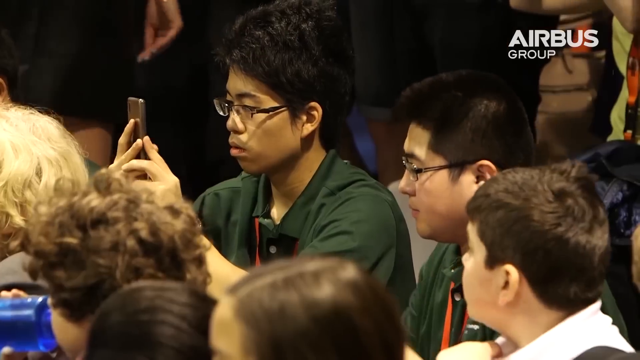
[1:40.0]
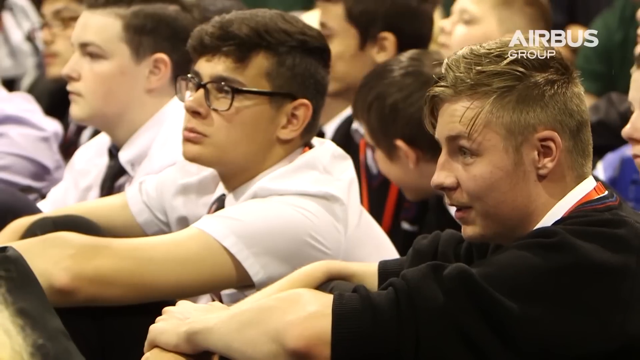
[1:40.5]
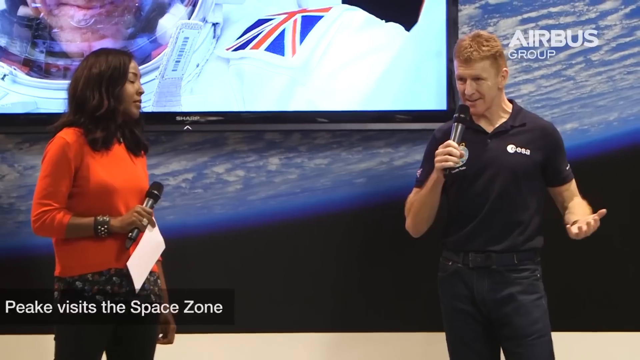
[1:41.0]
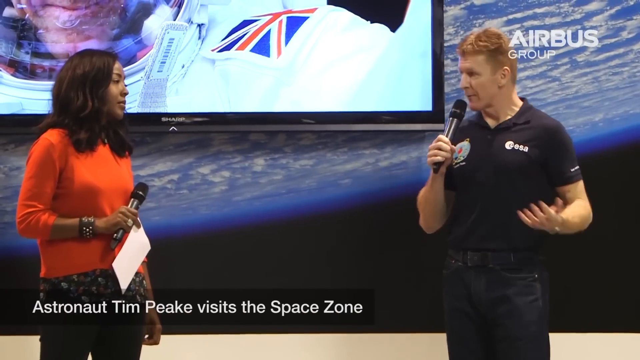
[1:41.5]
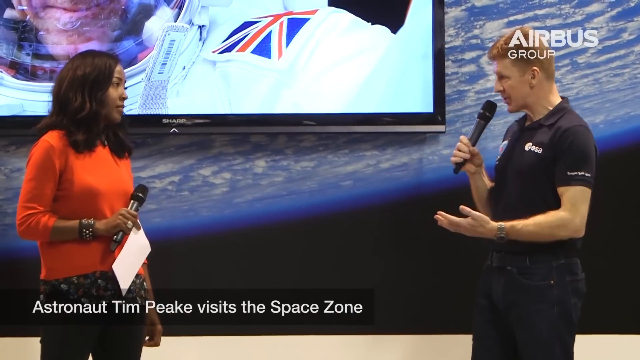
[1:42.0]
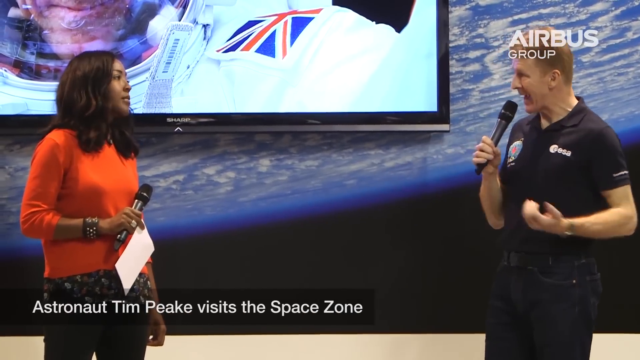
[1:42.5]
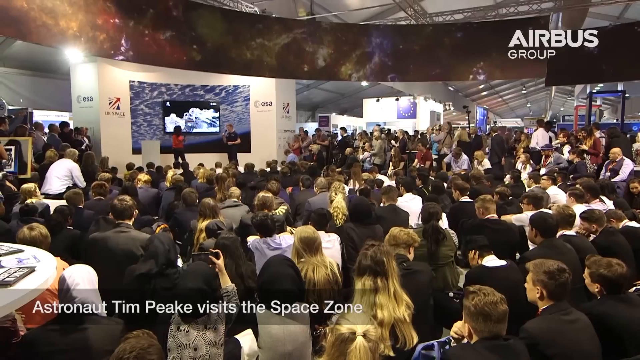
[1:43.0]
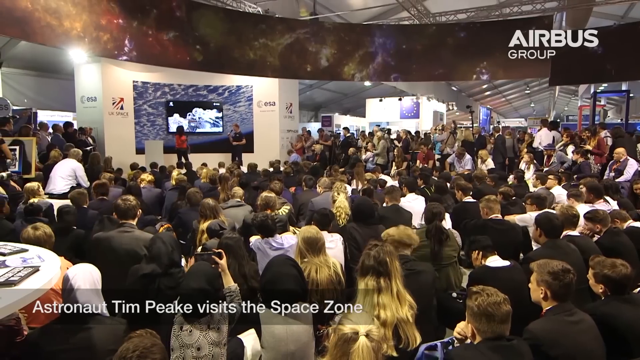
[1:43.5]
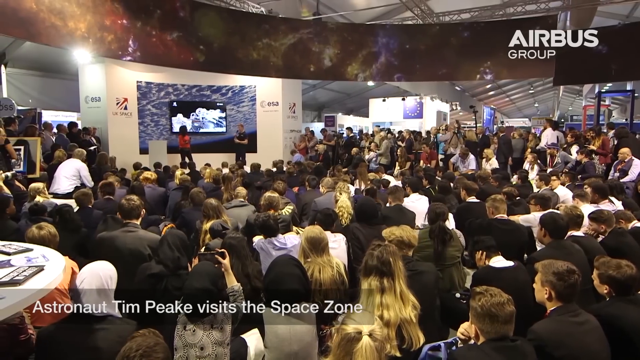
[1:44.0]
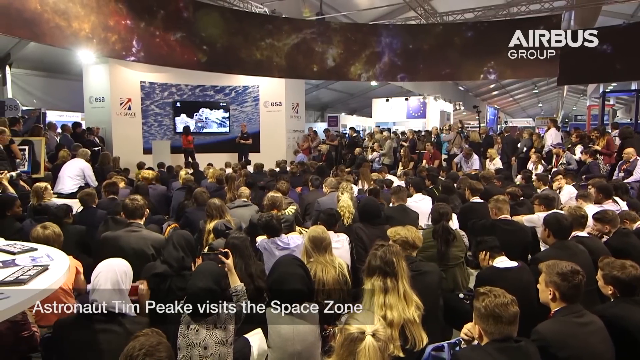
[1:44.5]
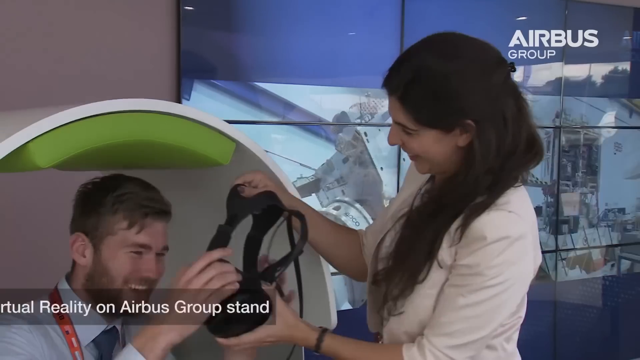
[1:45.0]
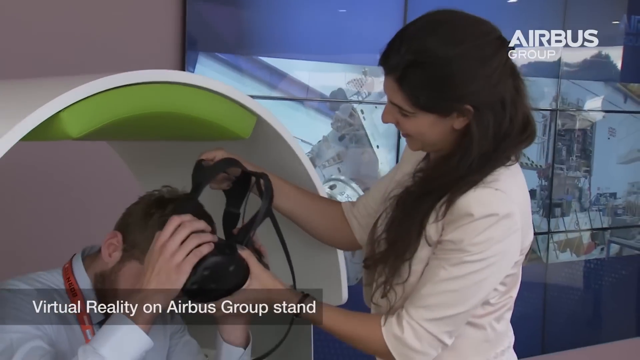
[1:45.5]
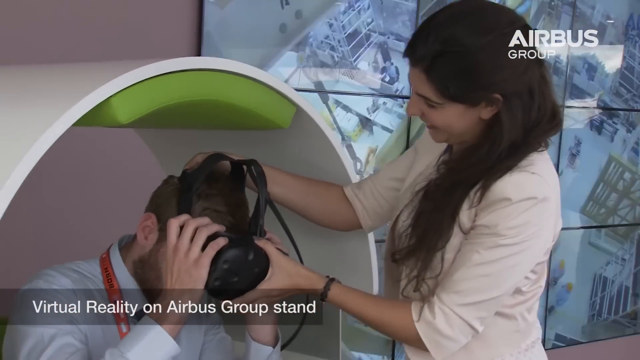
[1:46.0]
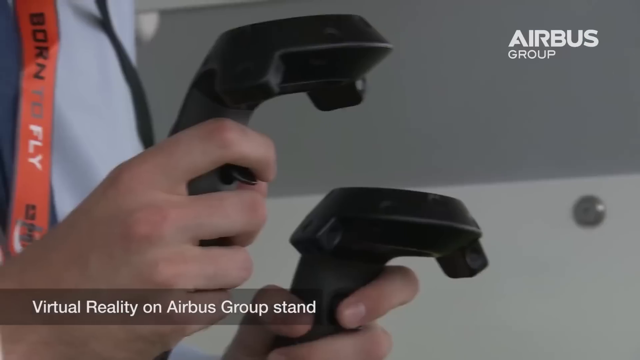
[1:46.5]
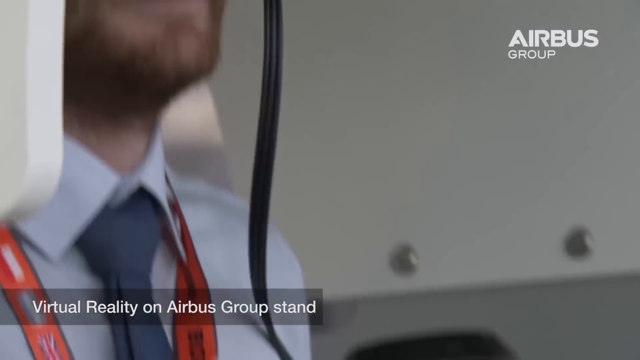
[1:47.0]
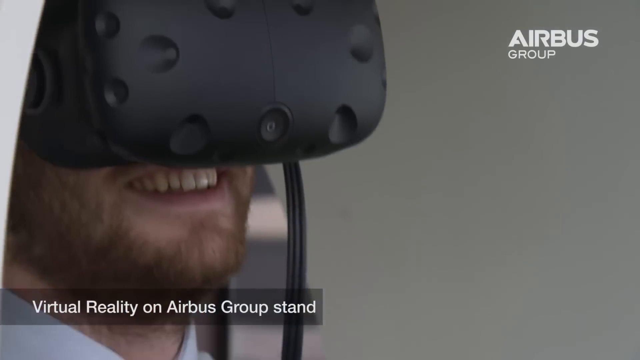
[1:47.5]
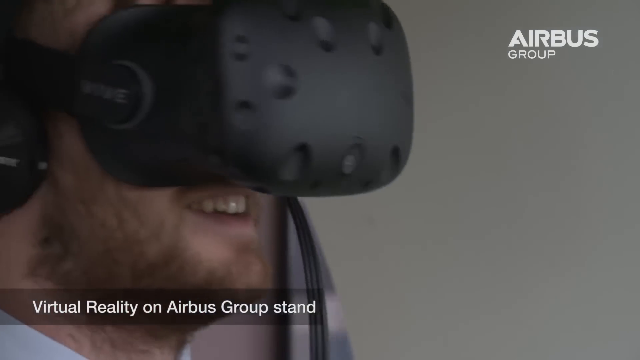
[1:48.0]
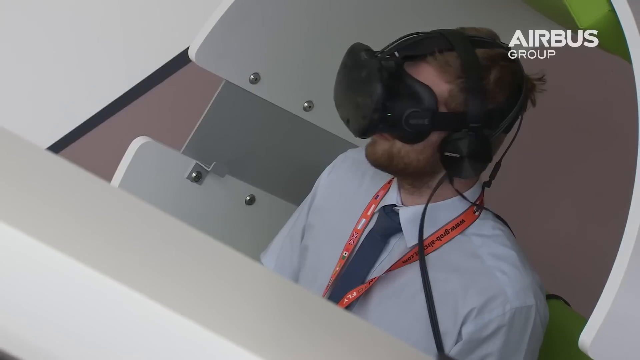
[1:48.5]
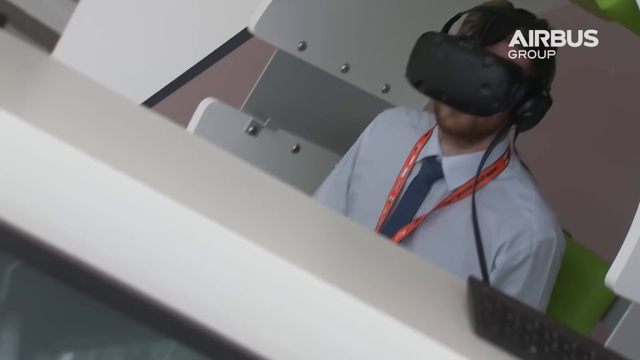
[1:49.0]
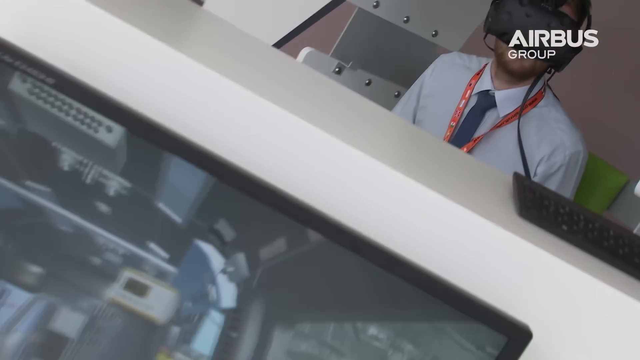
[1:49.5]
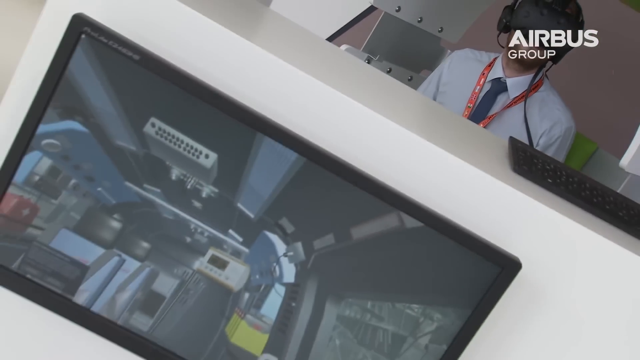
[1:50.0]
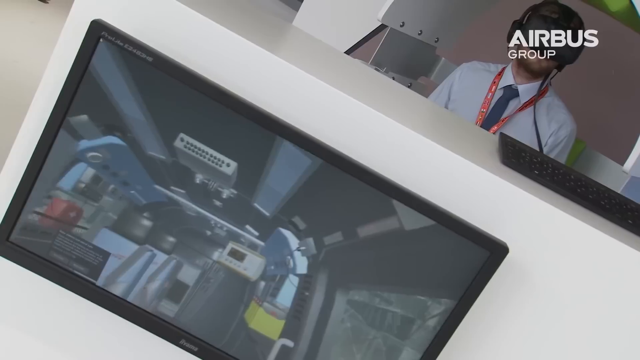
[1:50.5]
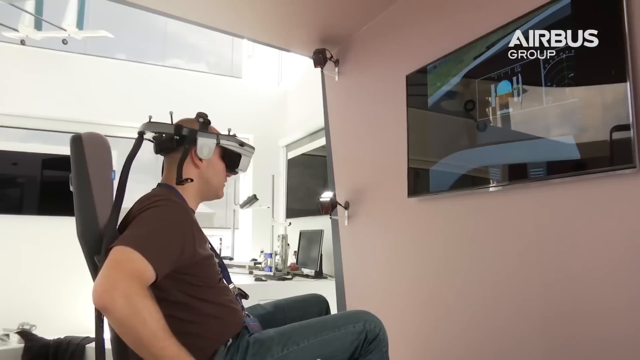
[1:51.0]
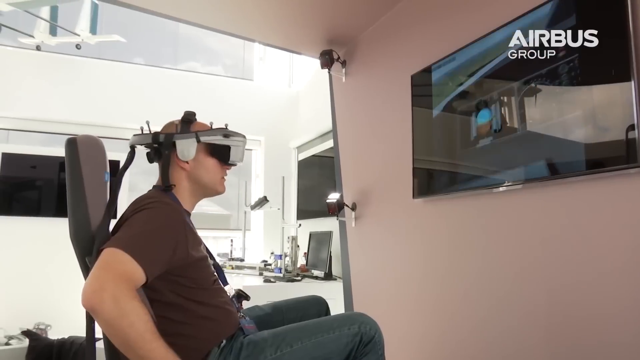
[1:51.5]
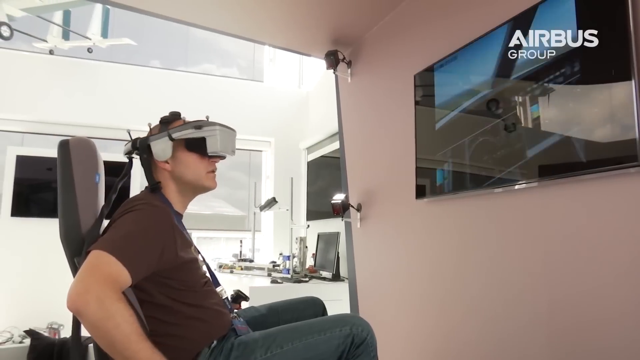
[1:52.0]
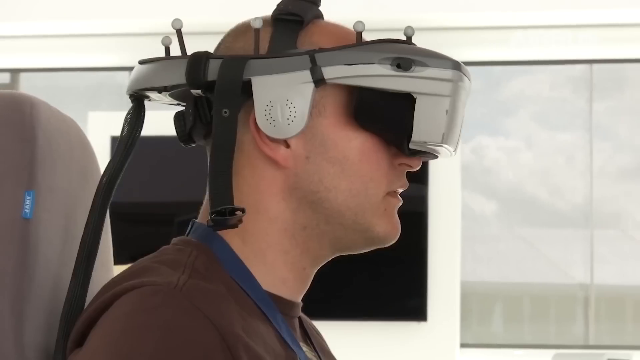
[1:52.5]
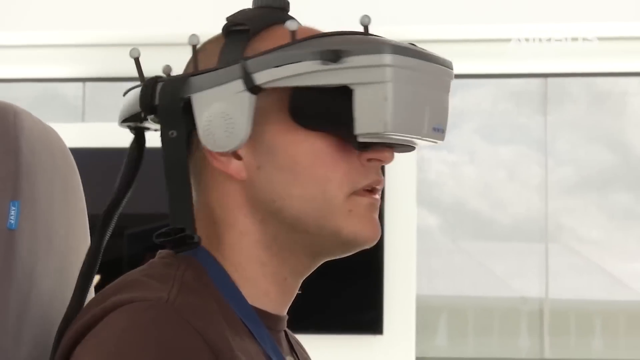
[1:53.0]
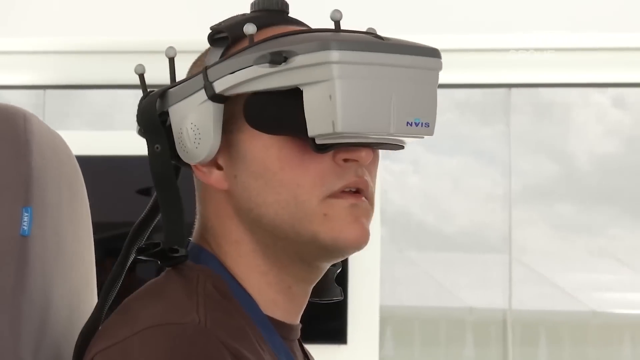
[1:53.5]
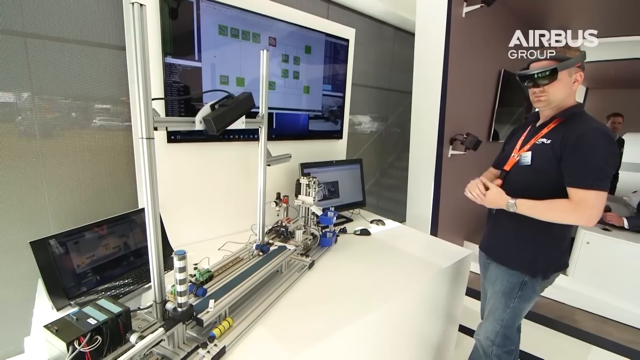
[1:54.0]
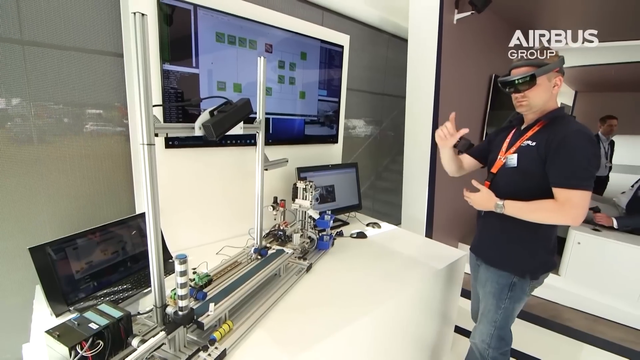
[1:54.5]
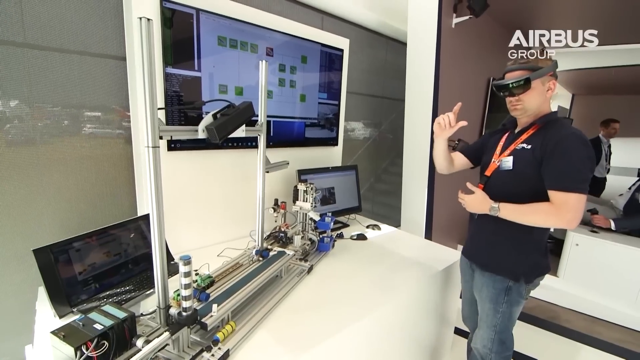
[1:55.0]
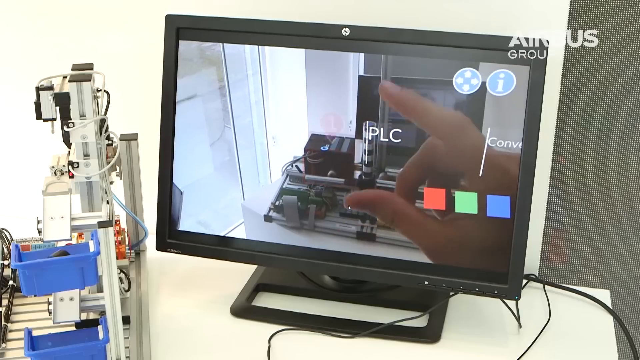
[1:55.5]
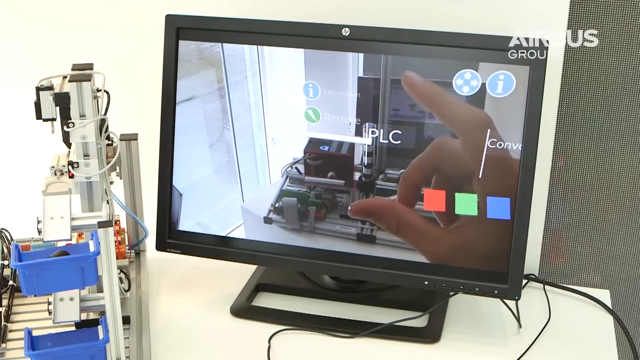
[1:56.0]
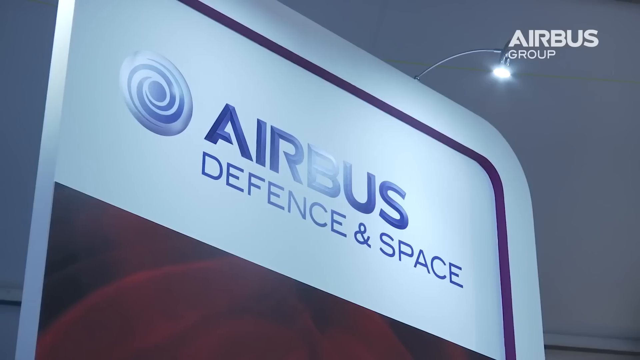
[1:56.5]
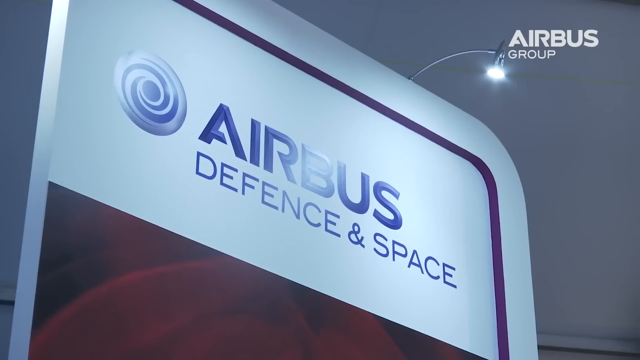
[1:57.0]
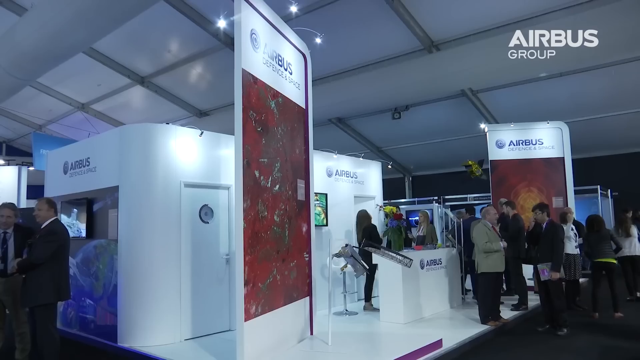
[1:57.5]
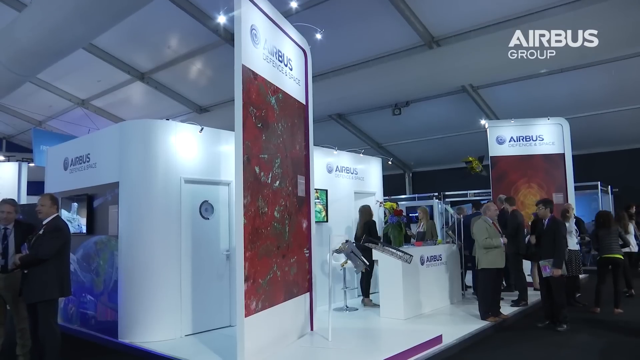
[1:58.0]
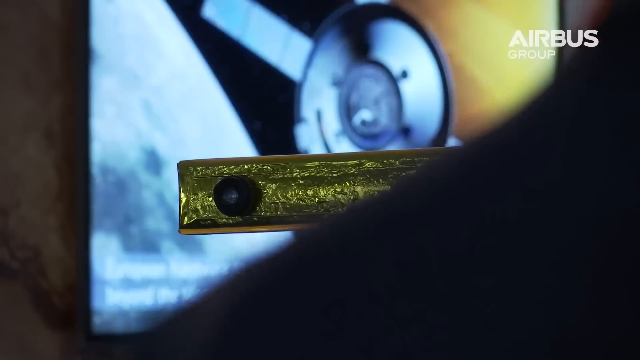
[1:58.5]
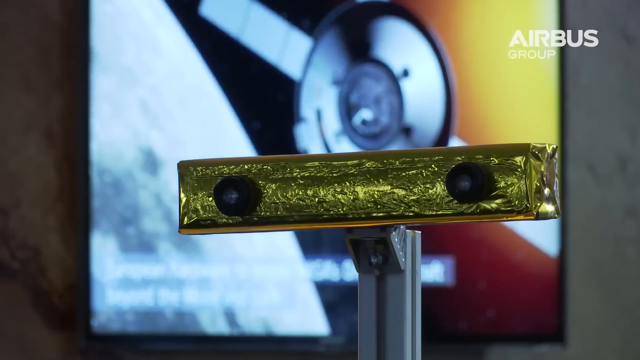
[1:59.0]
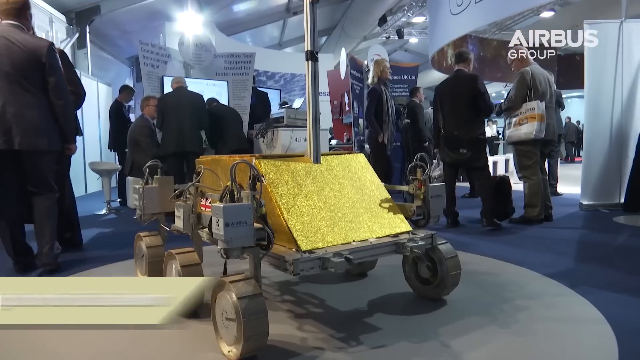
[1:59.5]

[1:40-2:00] A group of kids sits in the audience; one person in a dark green shirt looks at his cell phone, apparently taking a picture or recording a video. A group of male students is shown. The video cuts to what looks like two people on a stage: a woman wearing red and a man in a black polo shirt who is talking. On-screen text appears to identify him as Tim Peake visiting the Space Zone, and many people are listening to him. A lady puts a virtual reality headset on a kid. A man wearing the VR headset tests it out in a booth. Then Airbus Defence and Space is shown inside the lobby, with a group of people there.